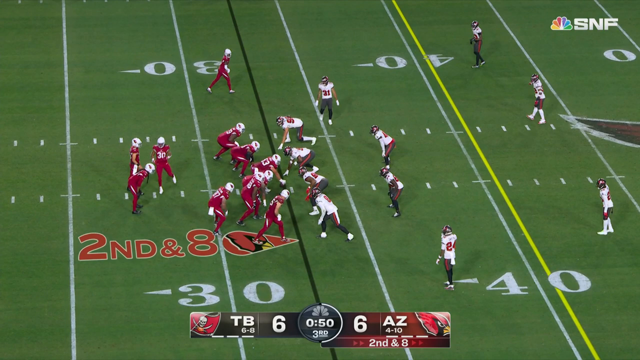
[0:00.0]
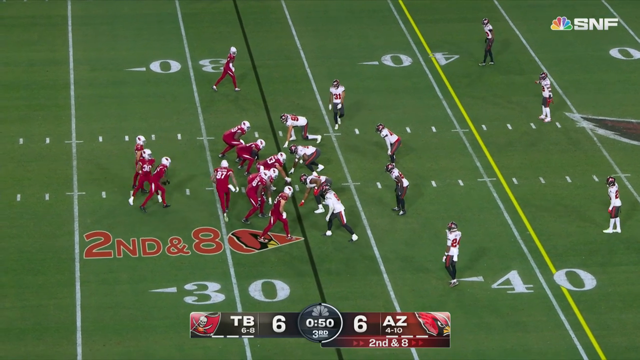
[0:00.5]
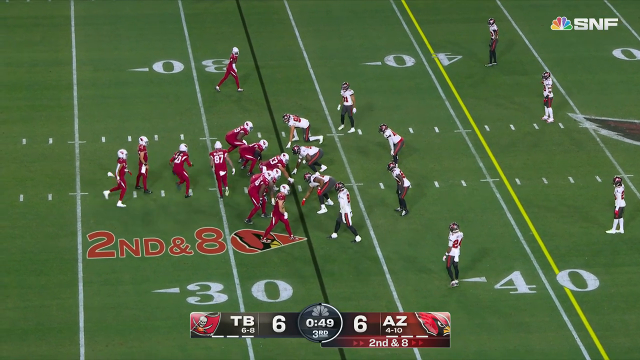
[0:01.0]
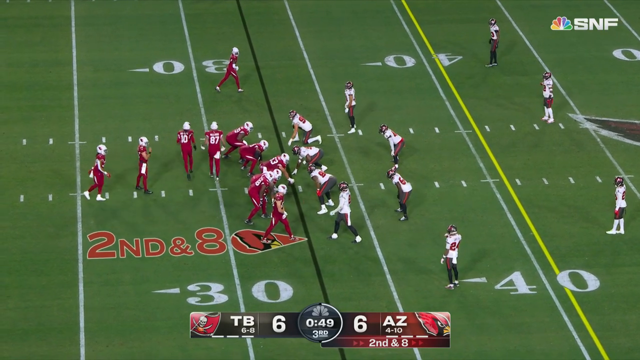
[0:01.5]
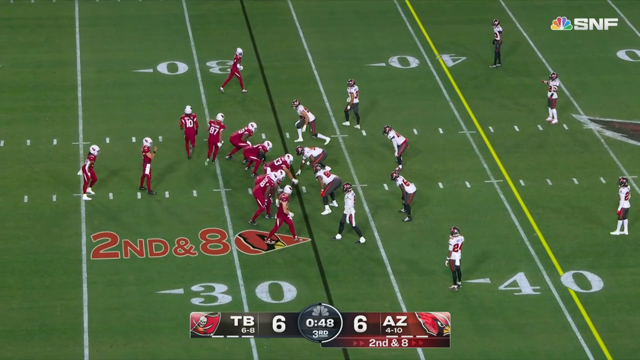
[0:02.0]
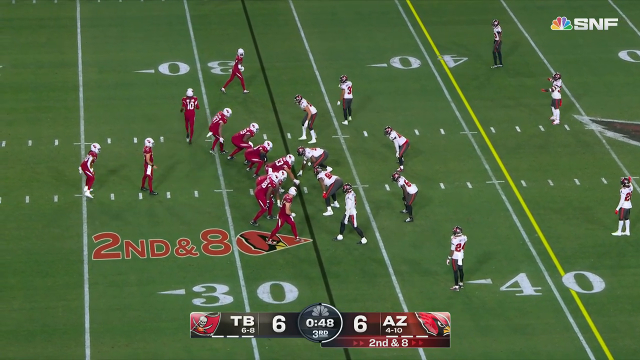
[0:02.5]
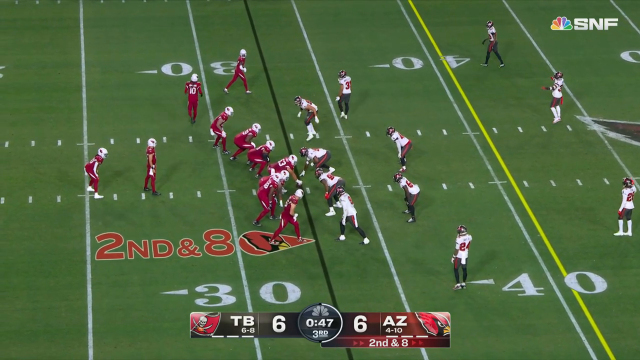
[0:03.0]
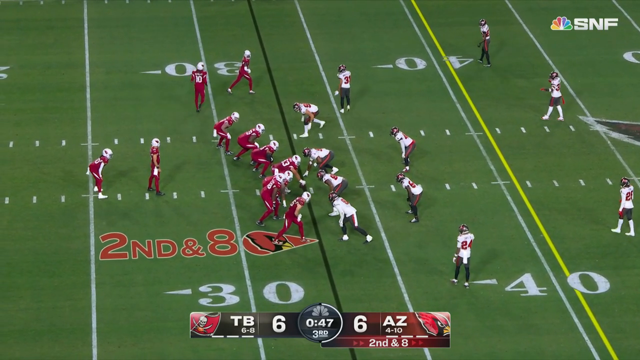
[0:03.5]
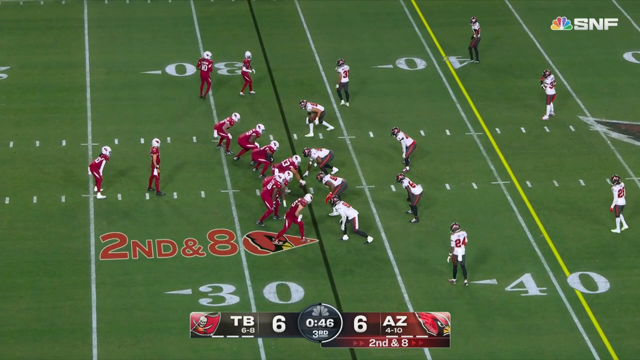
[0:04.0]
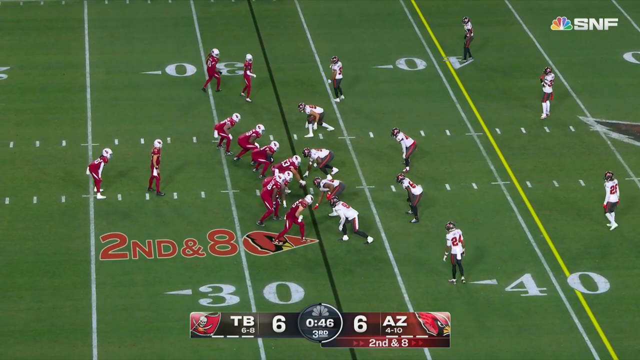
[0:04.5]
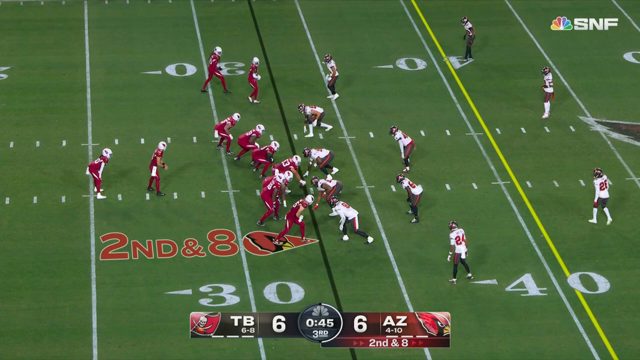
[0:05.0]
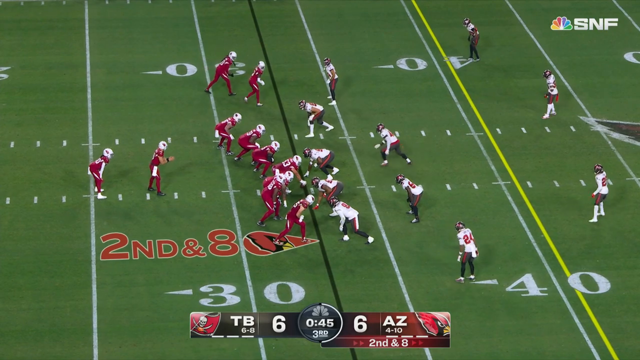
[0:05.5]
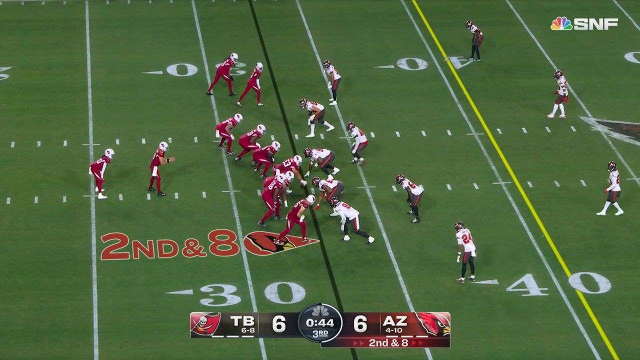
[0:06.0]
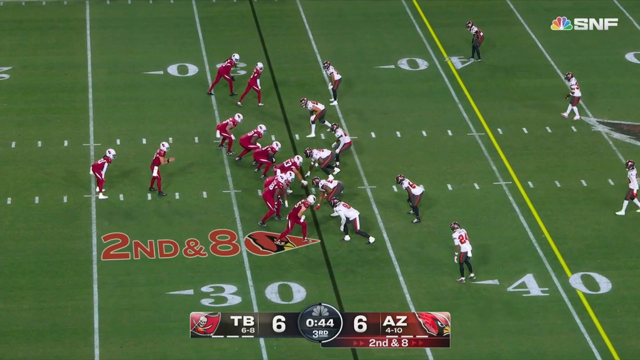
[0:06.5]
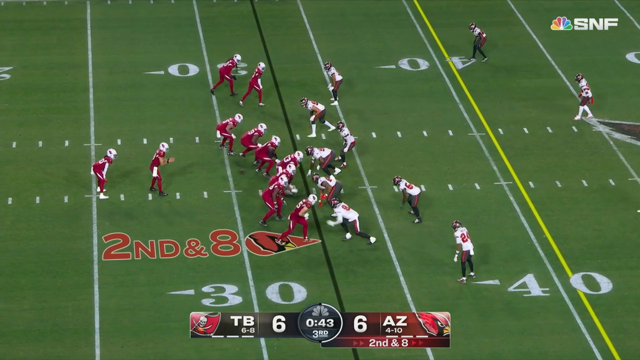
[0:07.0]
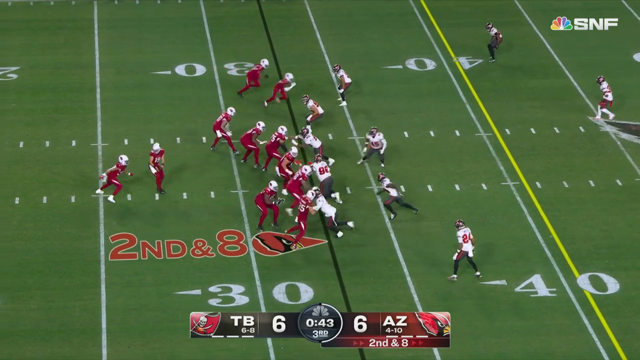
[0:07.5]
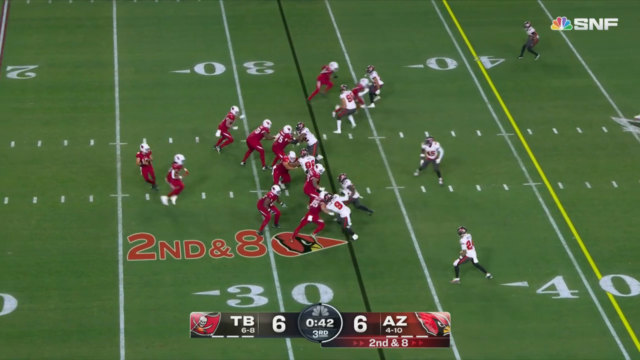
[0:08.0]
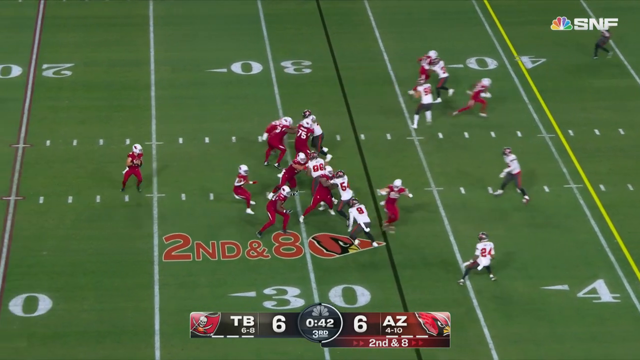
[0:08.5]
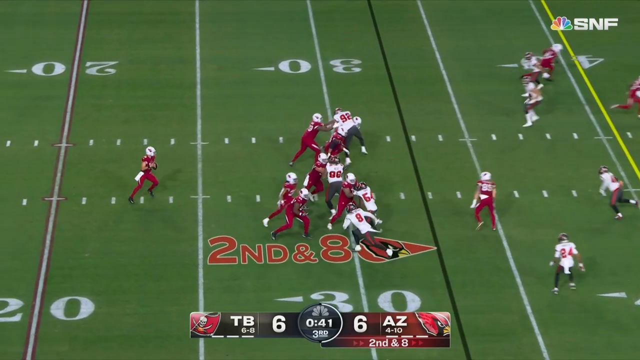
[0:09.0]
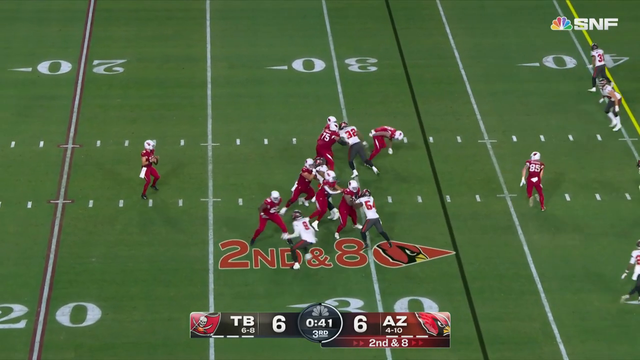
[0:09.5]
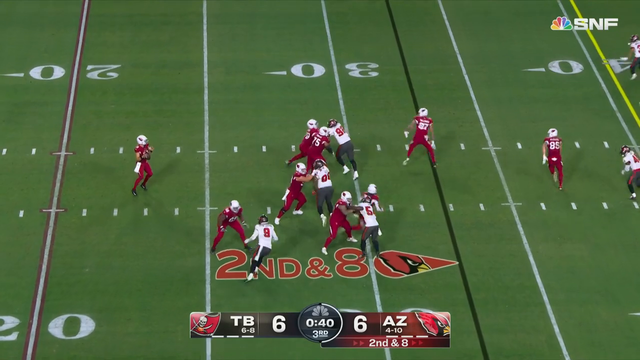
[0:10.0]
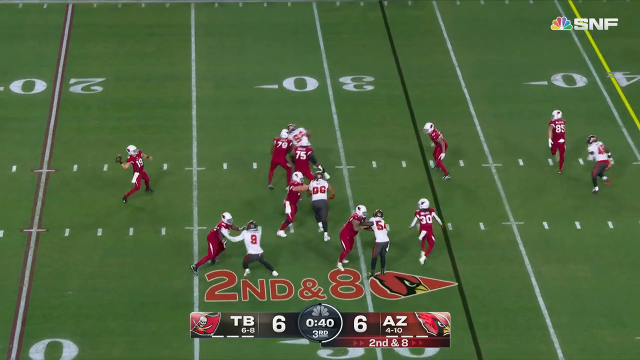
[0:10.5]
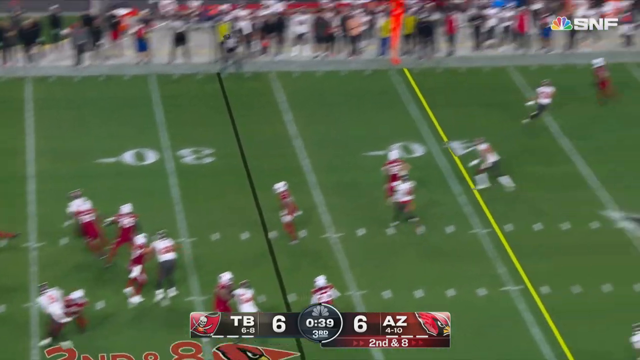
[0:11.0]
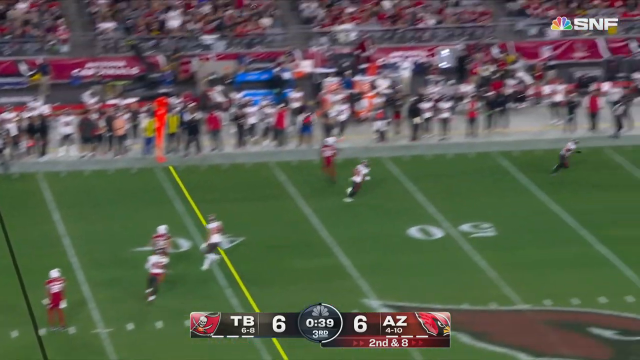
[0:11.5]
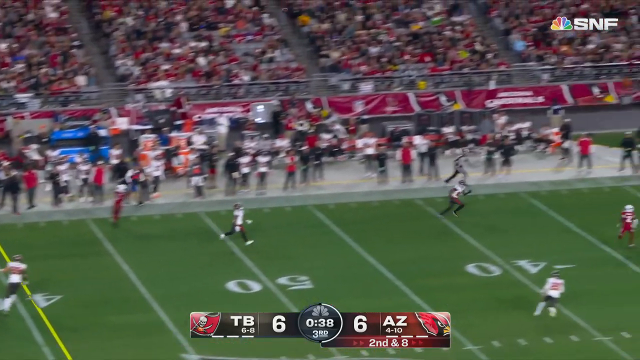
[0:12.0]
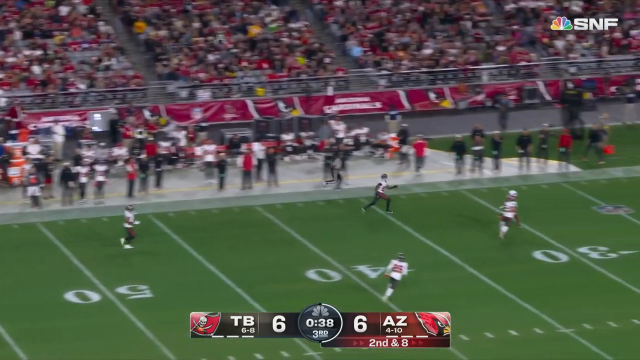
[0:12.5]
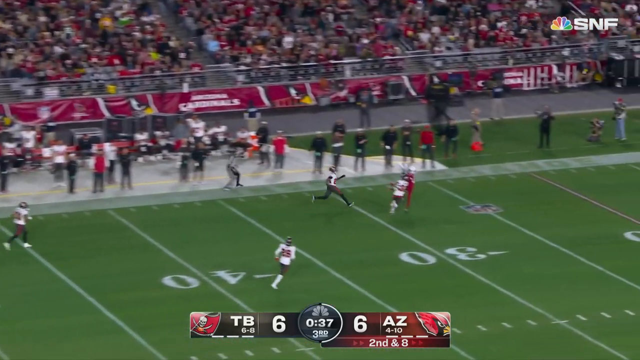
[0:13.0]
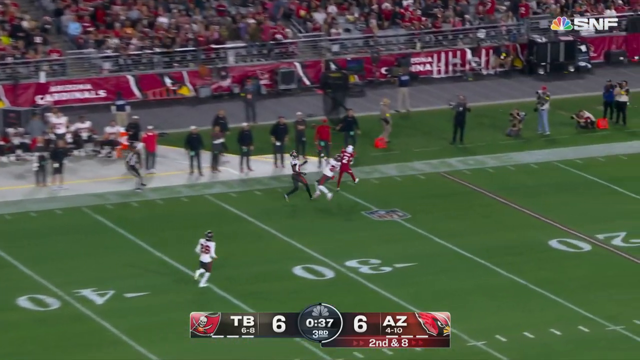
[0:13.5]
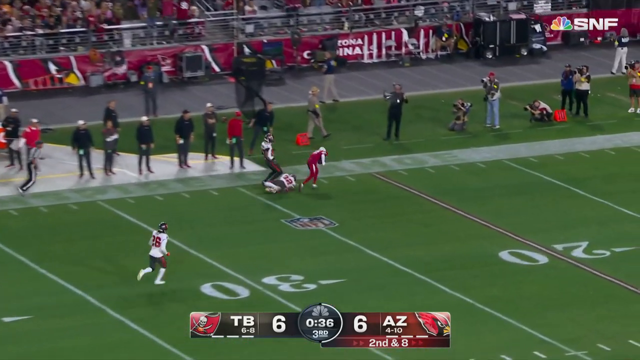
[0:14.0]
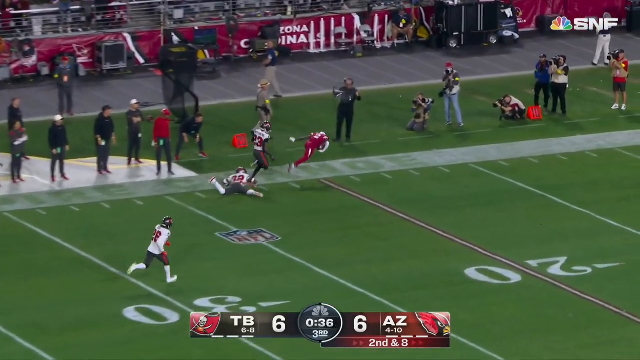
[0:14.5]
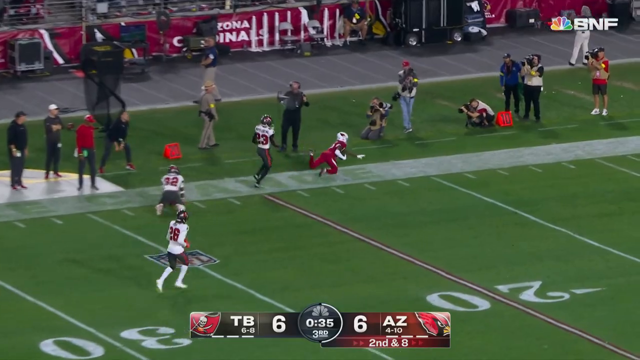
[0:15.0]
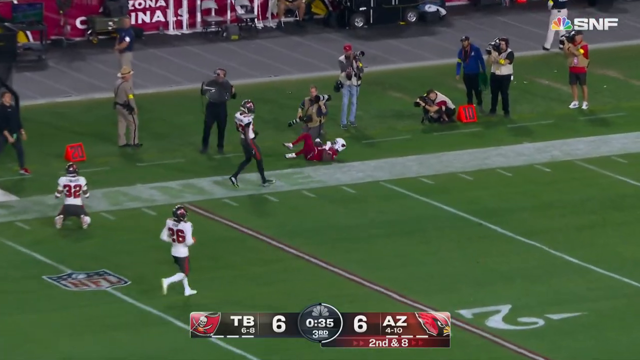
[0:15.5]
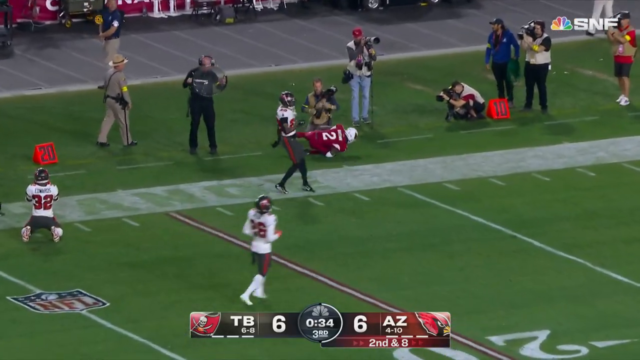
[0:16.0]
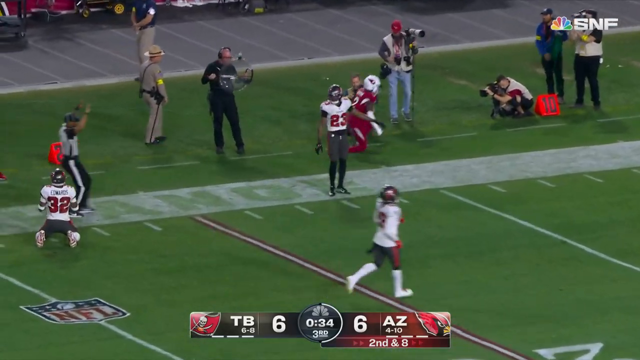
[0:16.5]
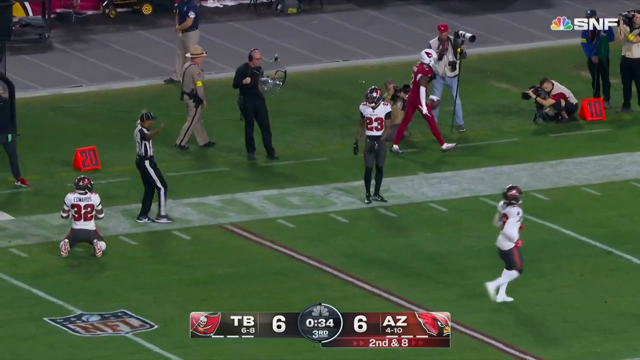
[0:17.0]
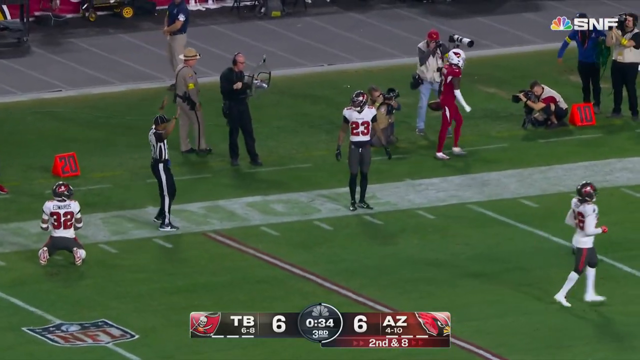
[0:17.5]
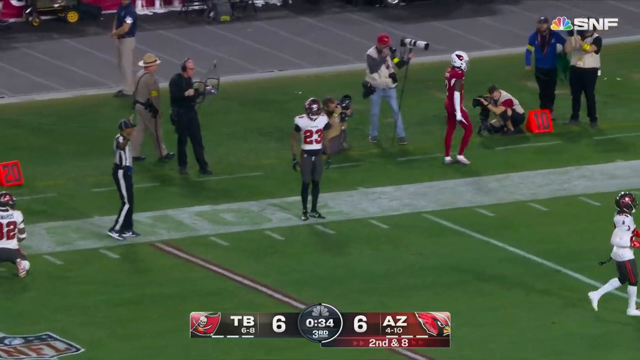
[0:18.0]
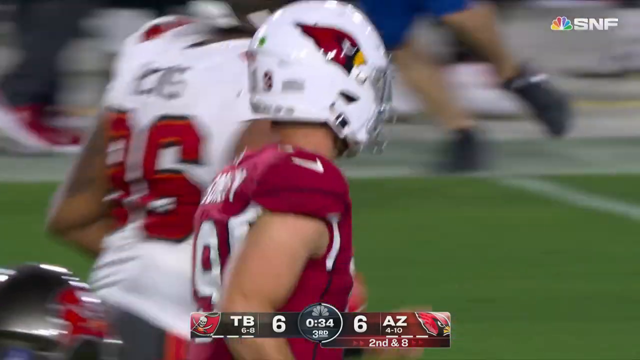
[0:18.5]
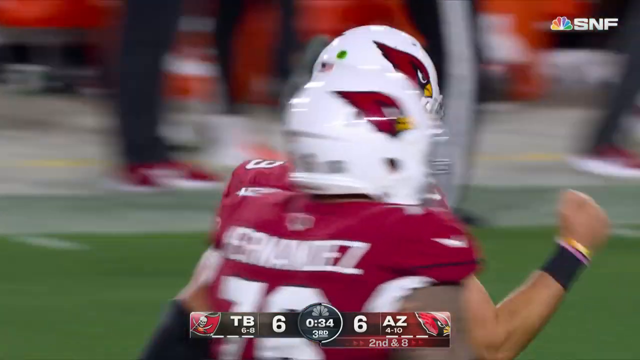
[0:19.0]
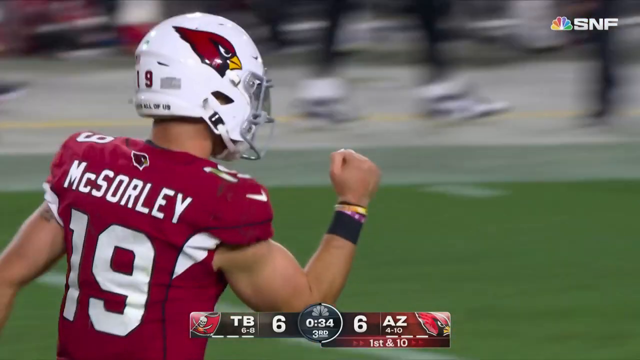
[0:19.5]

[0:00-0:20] A football game between Arizona and a team whose insignia is a bird, Tampa Bay, aired on NBC, with "SNF" on the screen. The score is 6-6, it is second and eight, and the team in red has possession at the line of scrimmage. The players move around and appear to attempt a run, but it is a feint: the team in white does not completely fall for it but loses some players to it, and one of the players in red runs quite far into their zone. The quarterback notices him and throws the ball, the football is caught, and the receiver finishes in the end zone, scoring a touchdown. Everything happens very quickly.